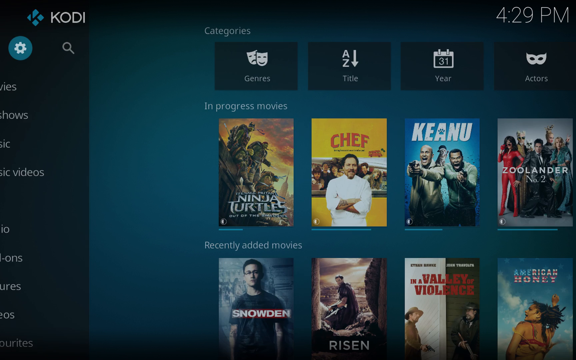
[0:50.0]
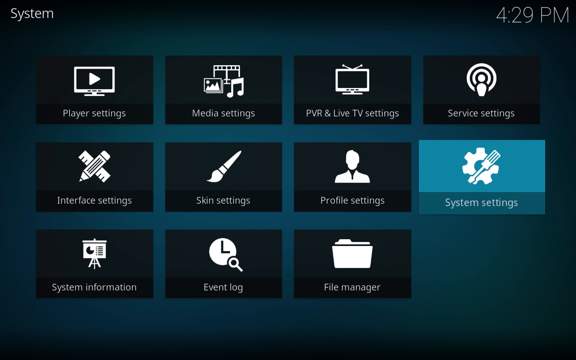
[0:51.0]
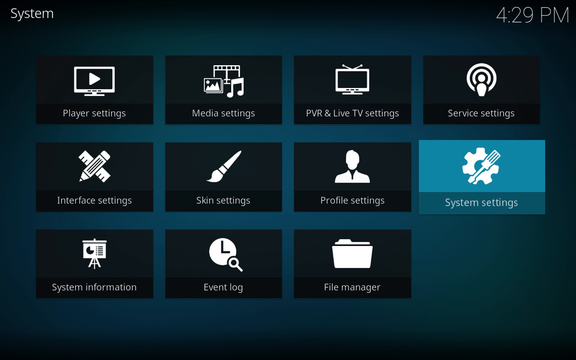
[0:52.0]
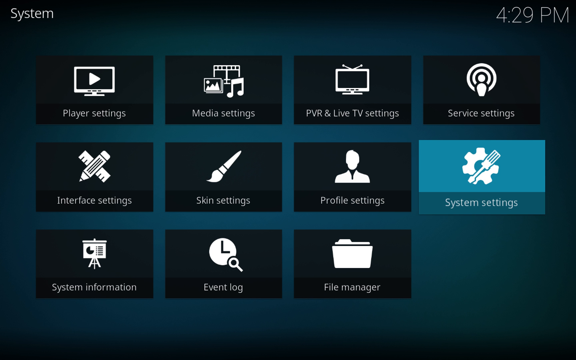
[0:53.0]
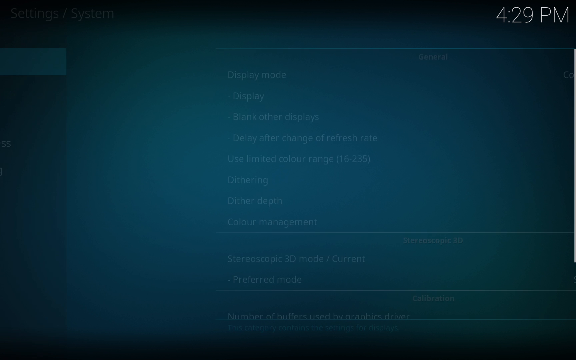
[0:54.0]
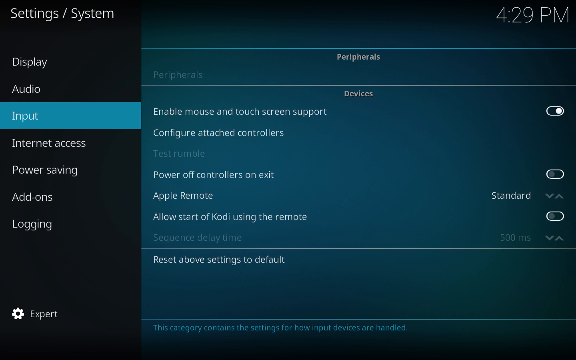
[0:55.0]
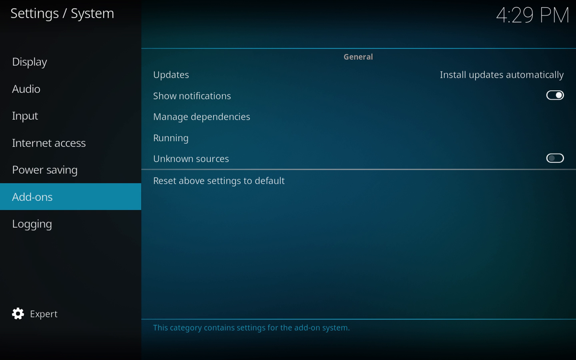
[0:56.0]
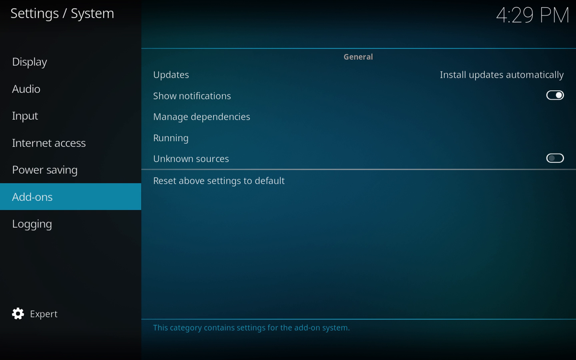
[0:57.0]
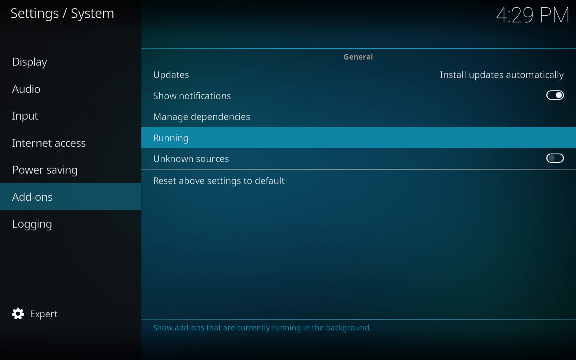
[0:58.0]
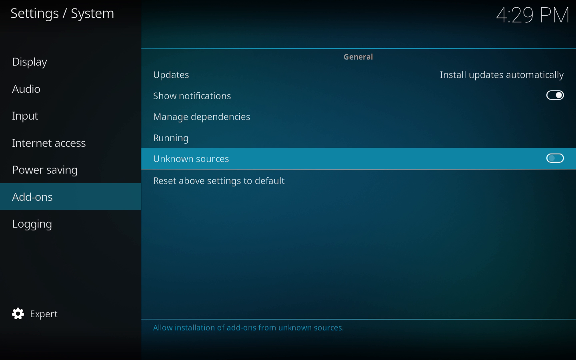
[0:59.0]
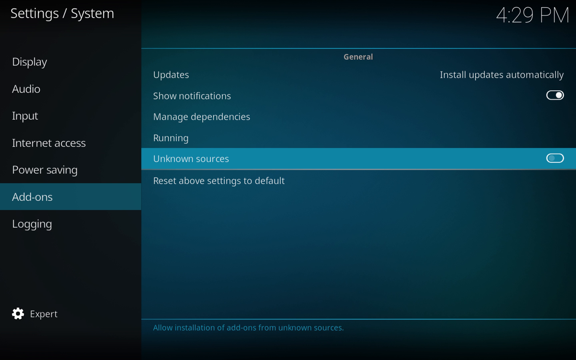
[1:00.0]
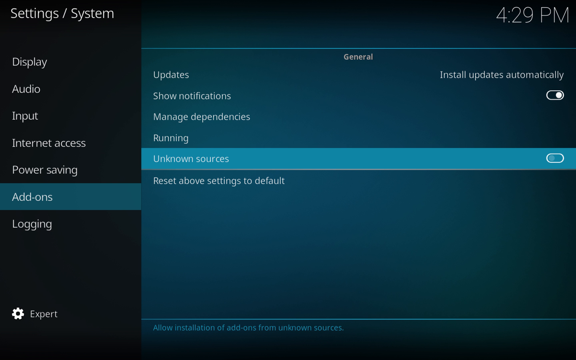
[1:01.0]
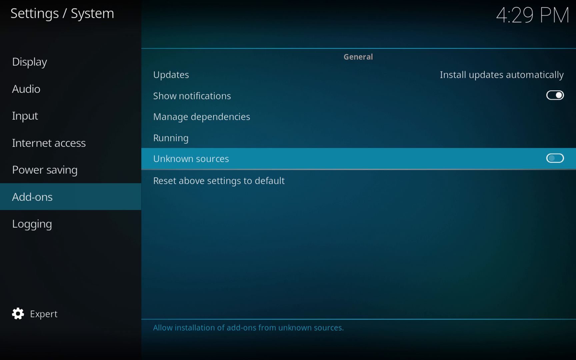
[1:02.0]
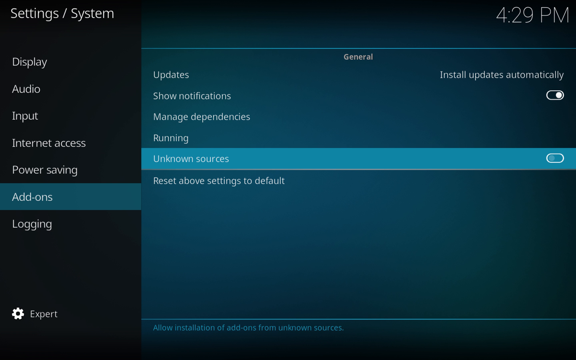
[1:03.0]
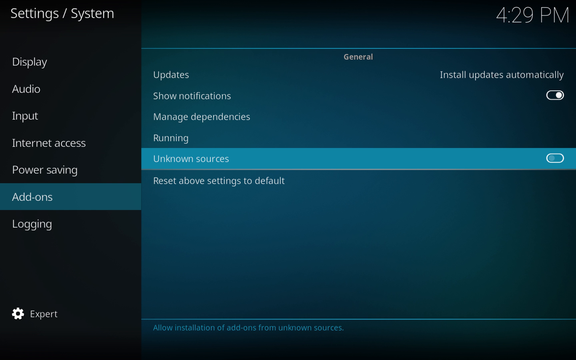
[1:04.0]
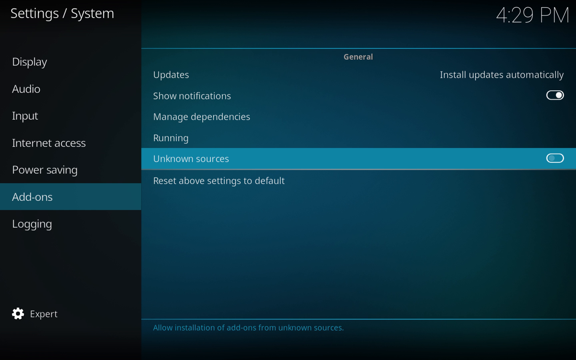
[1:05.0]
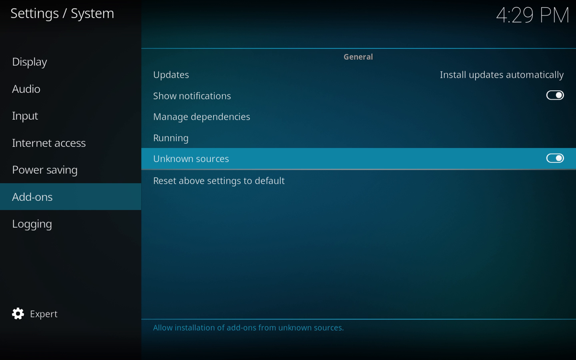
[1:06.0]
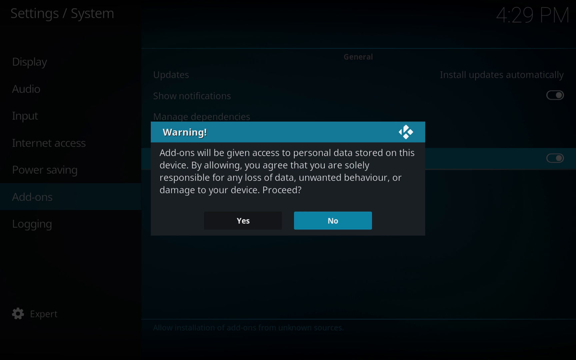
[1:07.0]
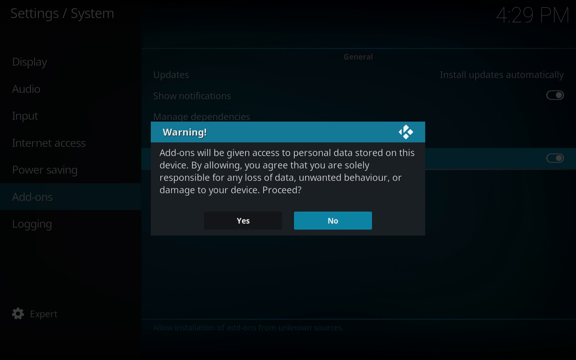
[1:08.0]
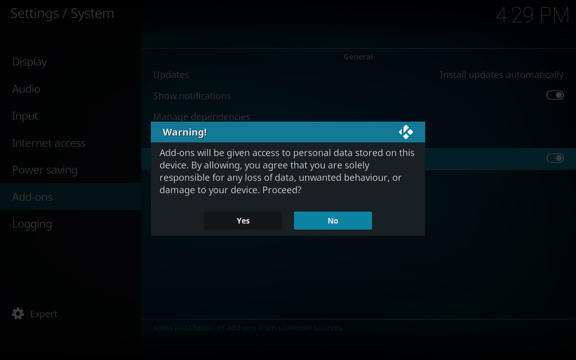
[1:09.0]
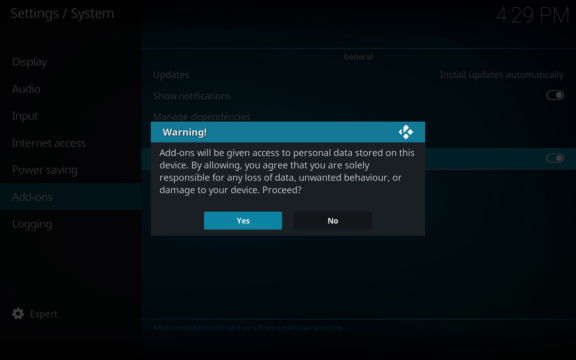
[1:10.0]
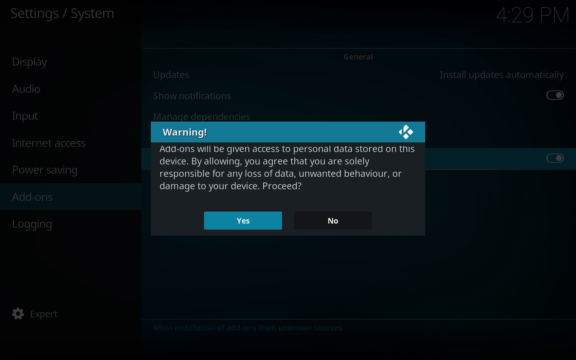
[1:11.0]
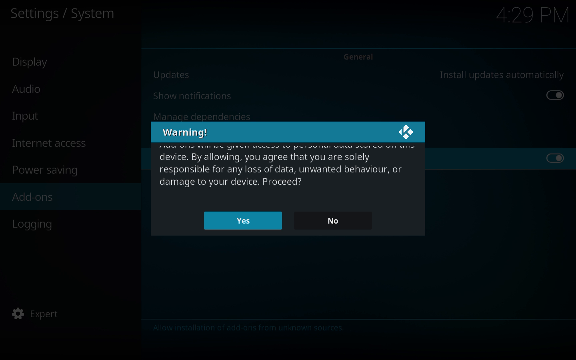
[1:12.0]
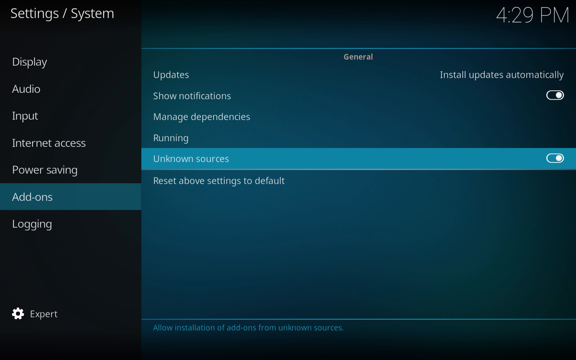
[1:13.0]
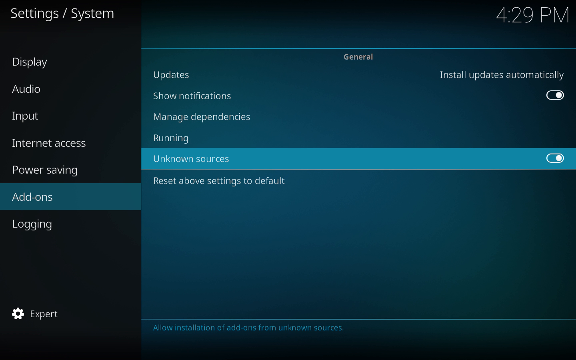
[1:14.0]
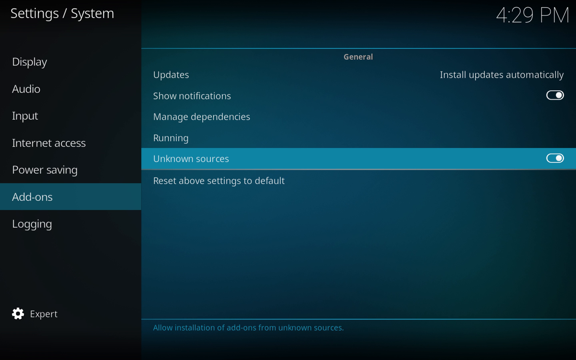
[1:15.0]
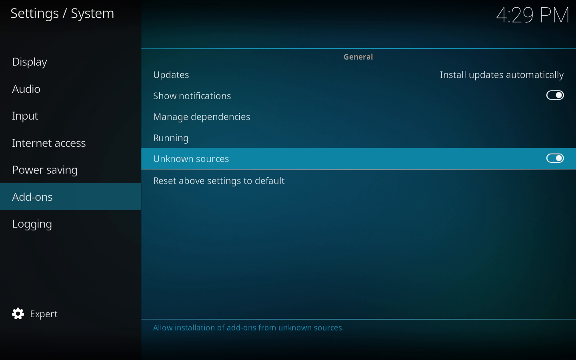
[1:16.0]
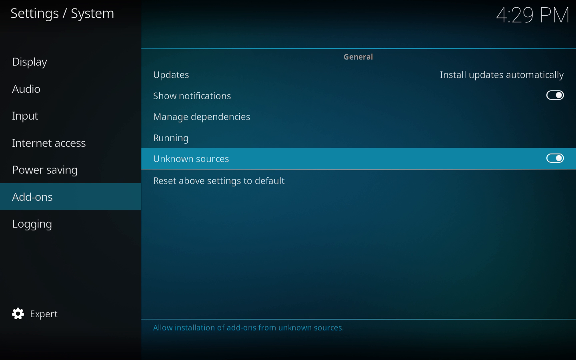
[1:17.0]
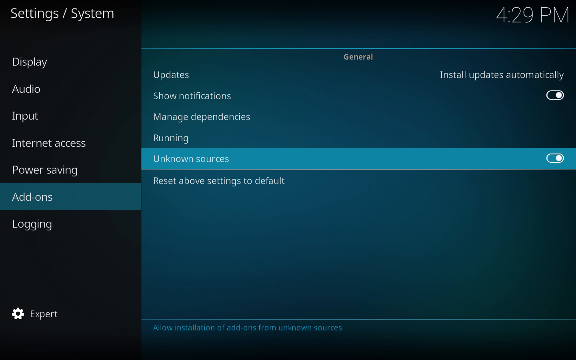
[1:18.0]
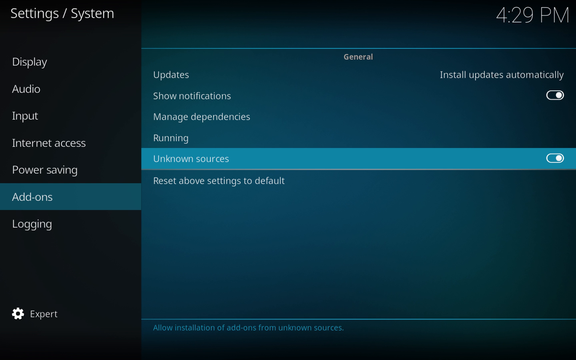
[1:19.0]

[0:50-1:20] The settings icon in the left side panel of the Kodi app is clicked, opening a page with 11 options with icons, such as player settings, media settings, server settings and system settings, with system settings in the second row, fourth column. The mouse hovers between system settings and profile settings, which are side by side, and then system settings is clicked, opening the system settings page. This page is also divided into two parts, with the left panel narrower than the right. The left panel has options such as display, audio, input, internet access, power saving, add-ons and logging. The selection moves down one by one from display to add-ons, then moves to the right side panel, going one by one through updates, show notifications, manage dependencies and running. Unknown sources is clicked and a warning pop-up appears with warning information and yes and no buttons. The yes button is clicked and the warning information scrolls. The toggle next to unknown sources is off at first, and after yes is clicked it is toggled on.